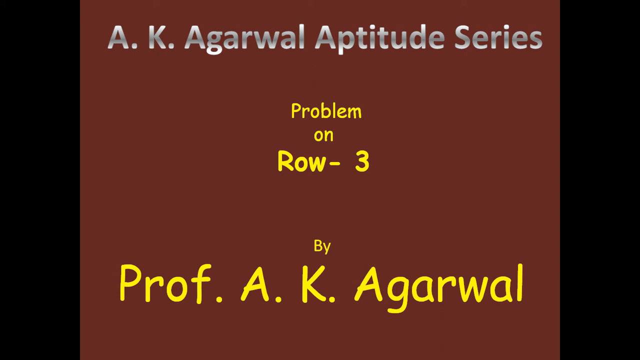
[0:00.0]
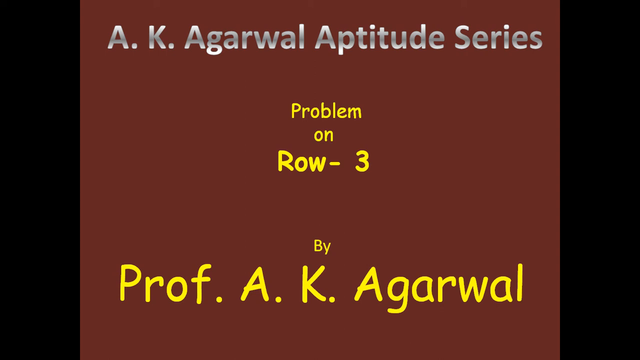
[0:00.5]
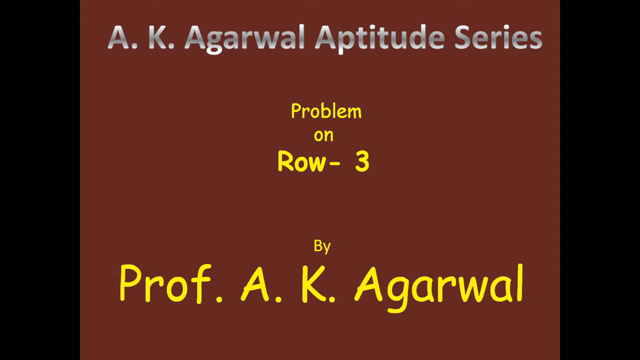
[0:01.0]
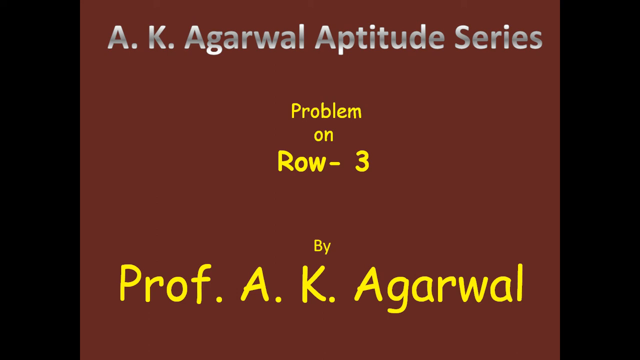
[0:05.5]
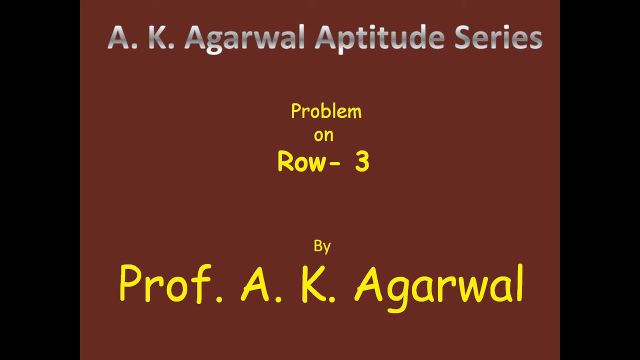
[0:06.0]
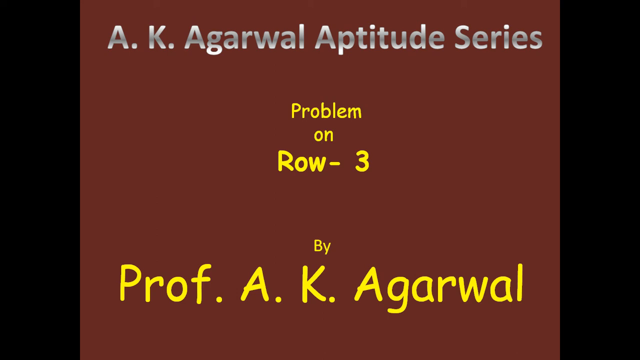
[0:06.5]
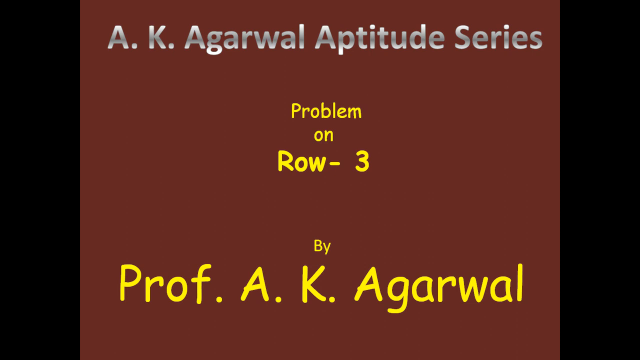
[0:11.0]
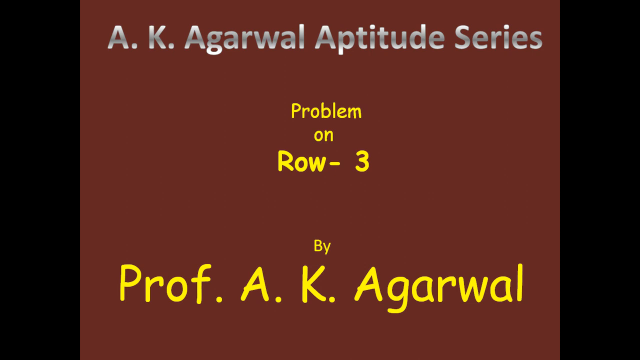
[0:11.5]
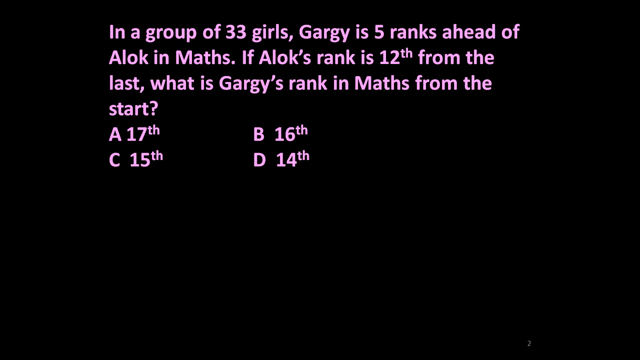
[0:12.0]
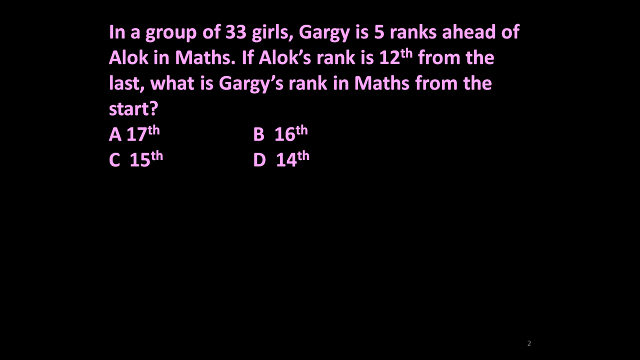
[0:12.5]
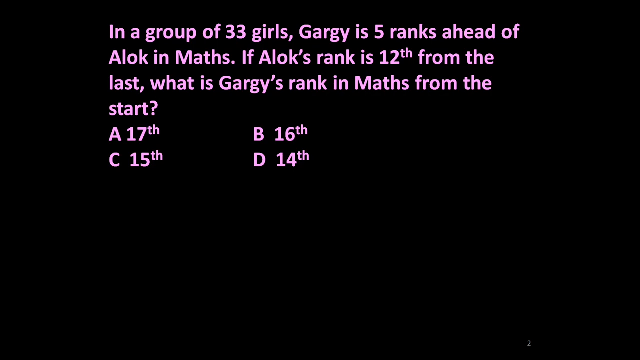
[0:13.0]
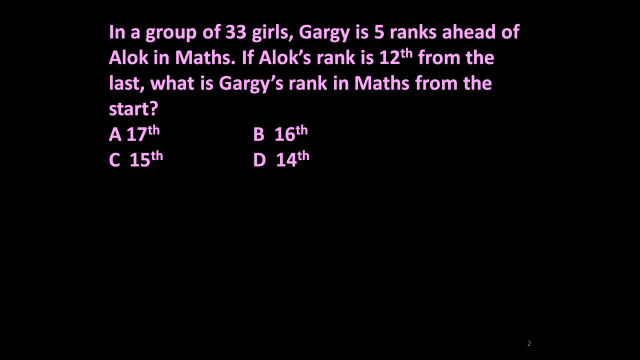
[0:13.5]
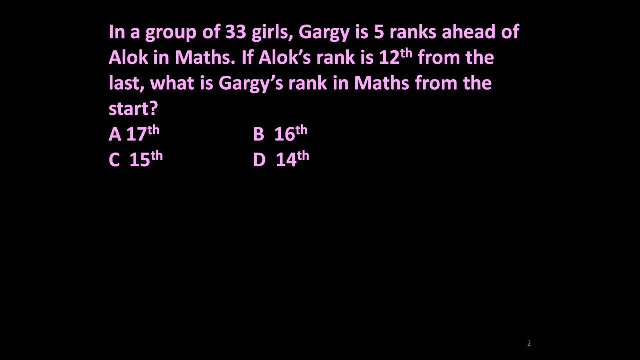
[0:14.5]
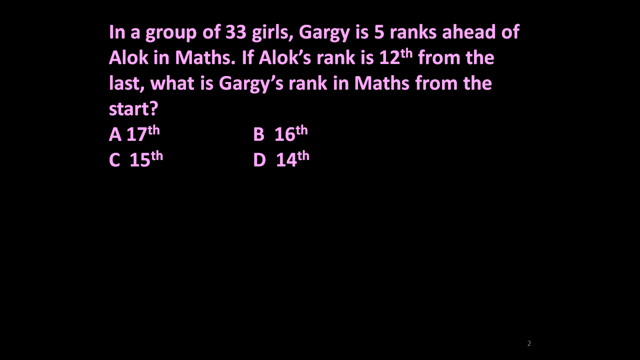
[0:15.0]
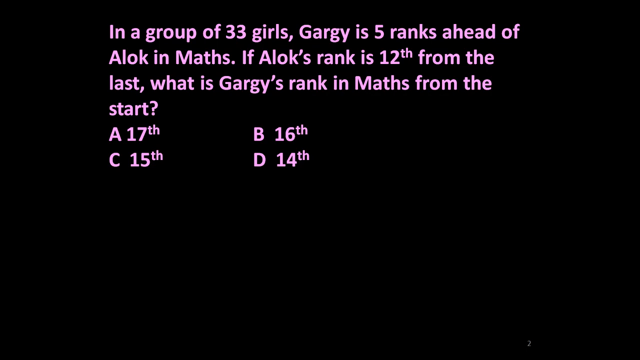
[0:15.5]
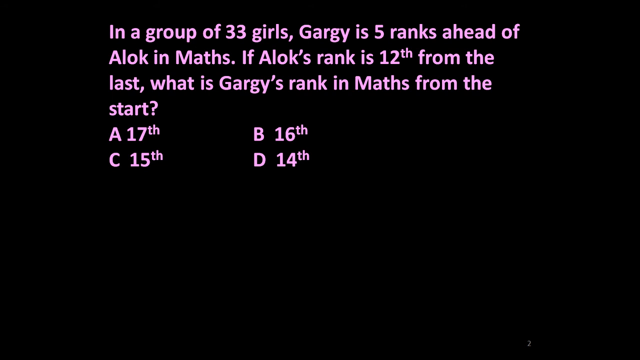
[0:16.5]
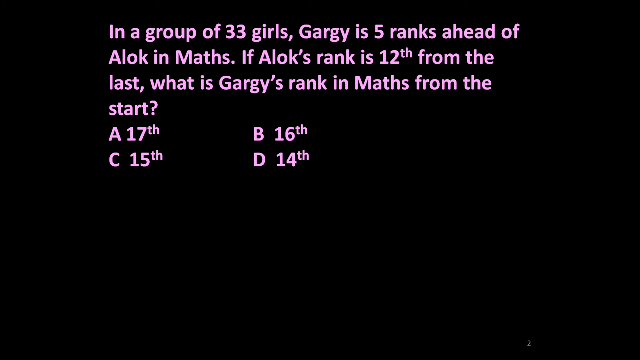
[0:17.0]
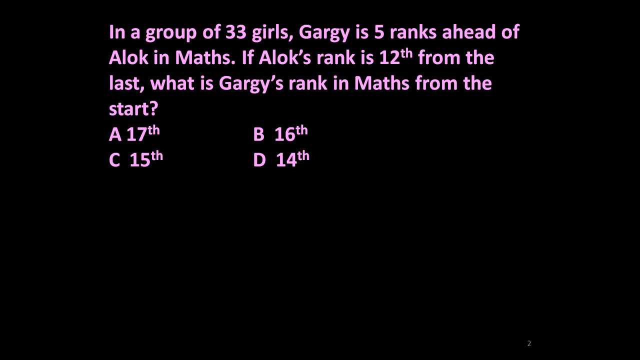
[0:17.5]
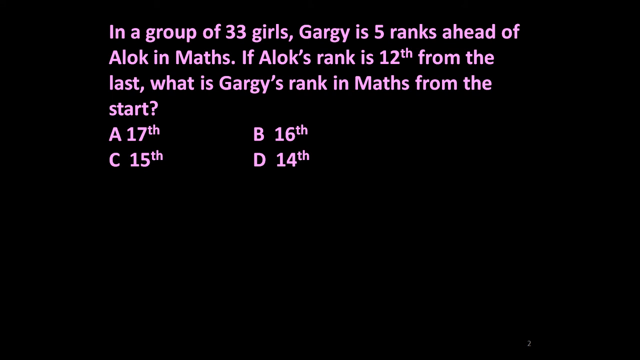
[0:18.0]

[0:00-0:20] An intro cover appears, showing that the video is by Professor A. K. Agarwal, titled "Problem on Row 3," and part of his A. K. Agarwal aptitude series. The background is a blank maroon colour with yellow writing giving the professor's name and the title; on top of that, "A. K. Agarwal Aptitude Series" appears in grey and black font. The scene then cuts to a black background showing a question that looks to be a quiz, followed by four options to choose from.